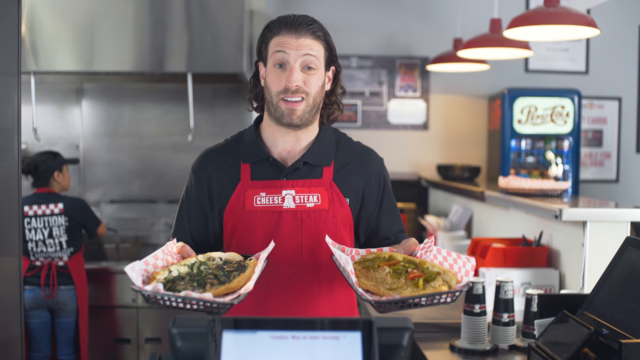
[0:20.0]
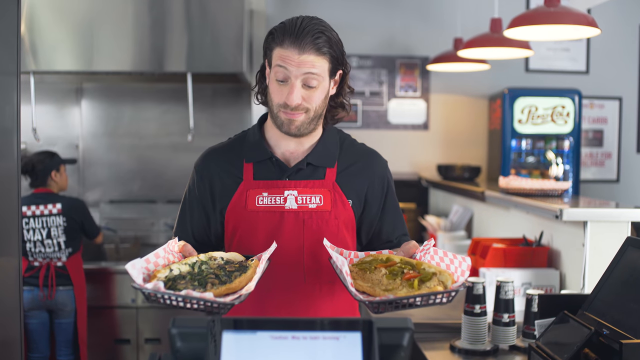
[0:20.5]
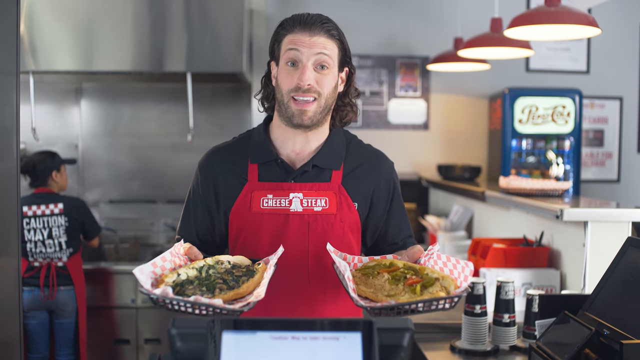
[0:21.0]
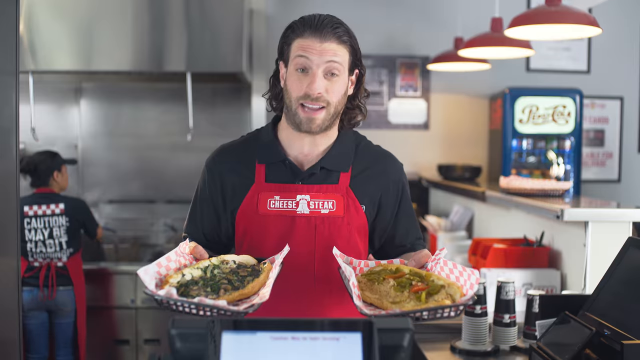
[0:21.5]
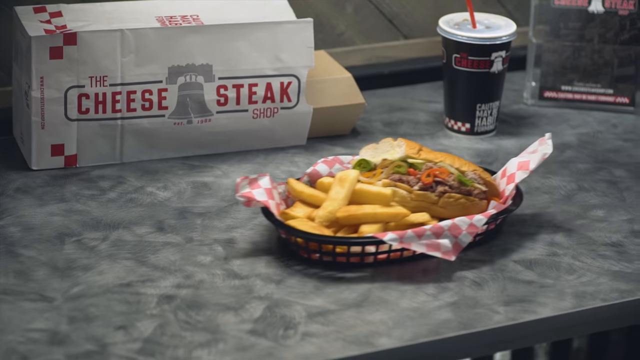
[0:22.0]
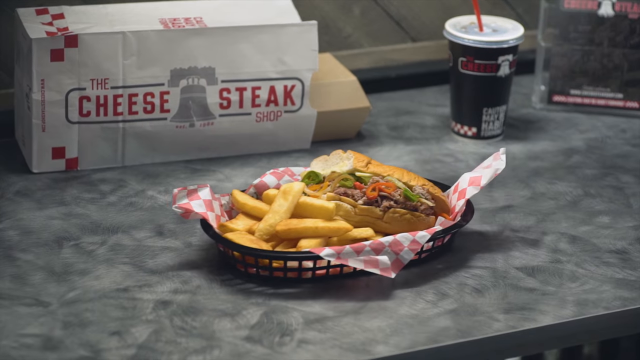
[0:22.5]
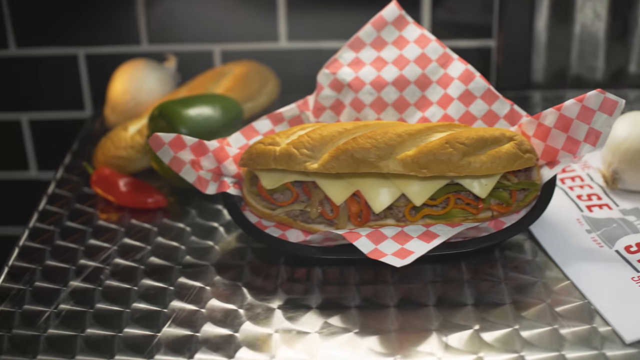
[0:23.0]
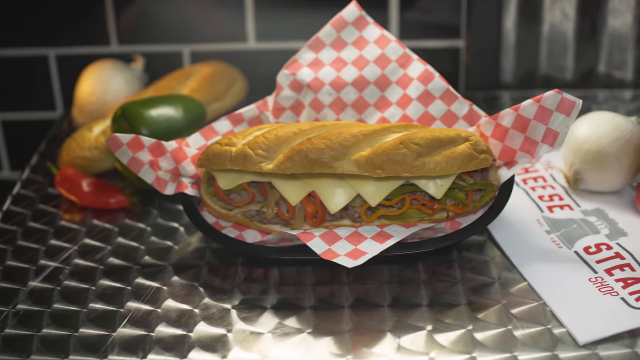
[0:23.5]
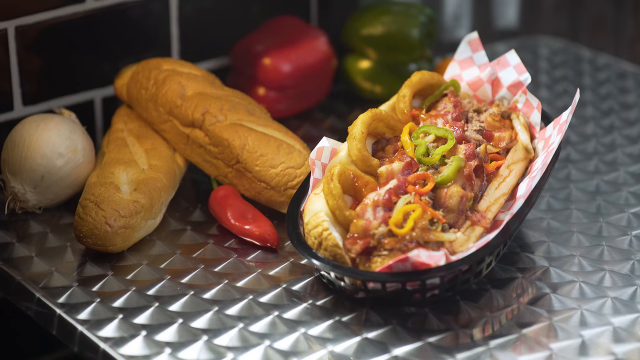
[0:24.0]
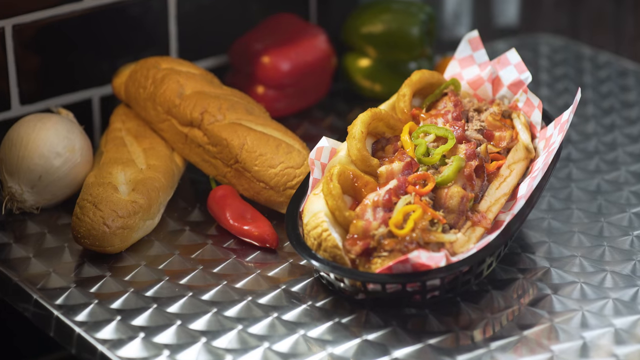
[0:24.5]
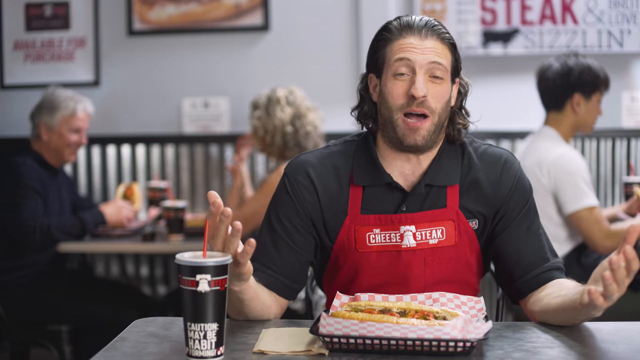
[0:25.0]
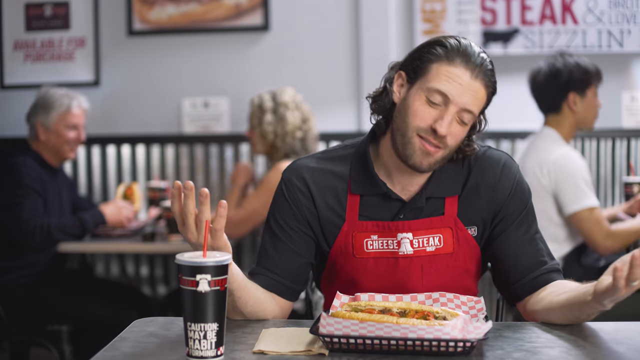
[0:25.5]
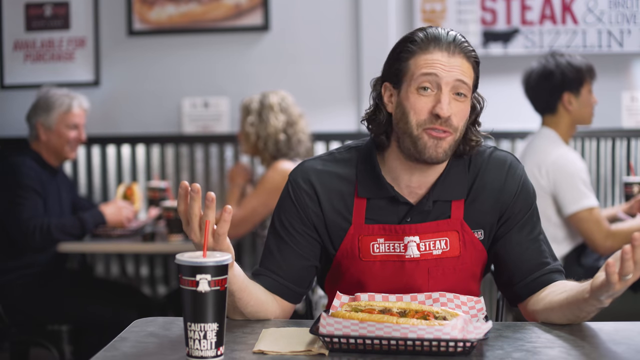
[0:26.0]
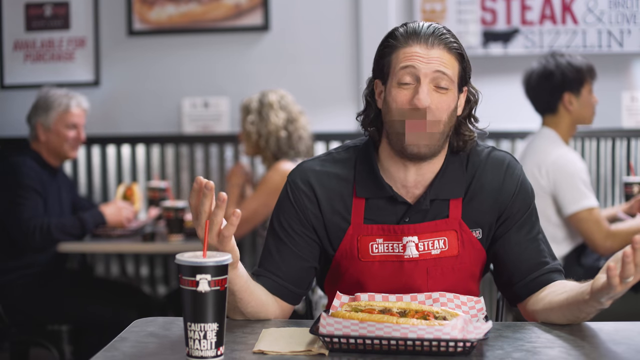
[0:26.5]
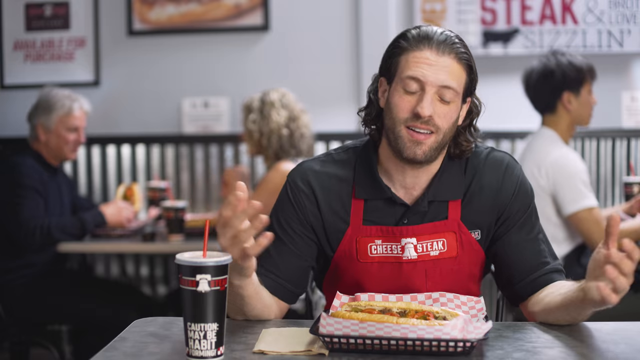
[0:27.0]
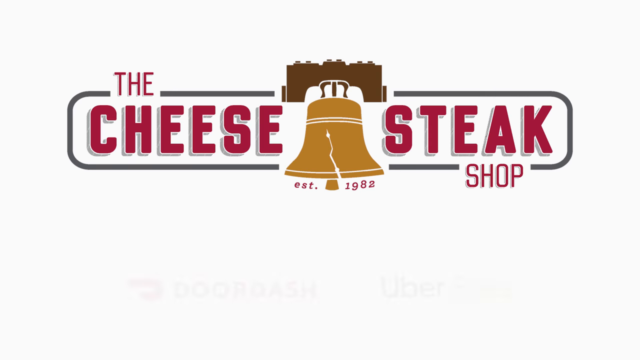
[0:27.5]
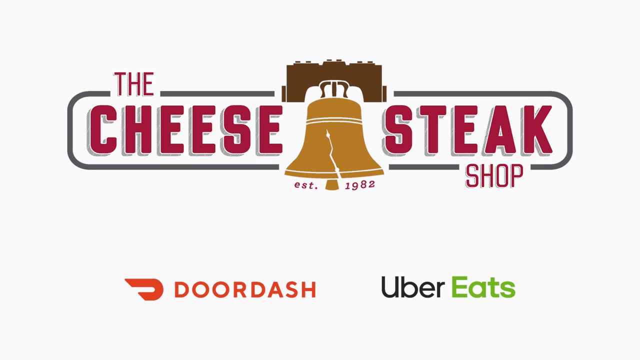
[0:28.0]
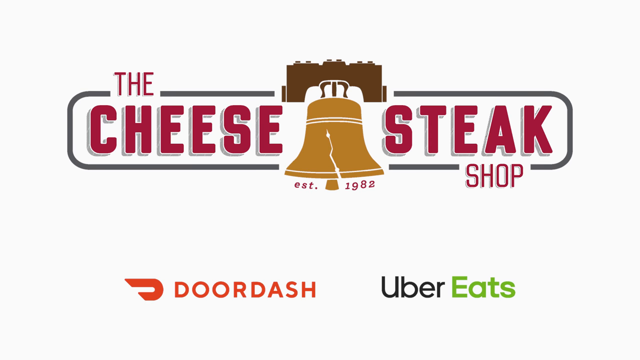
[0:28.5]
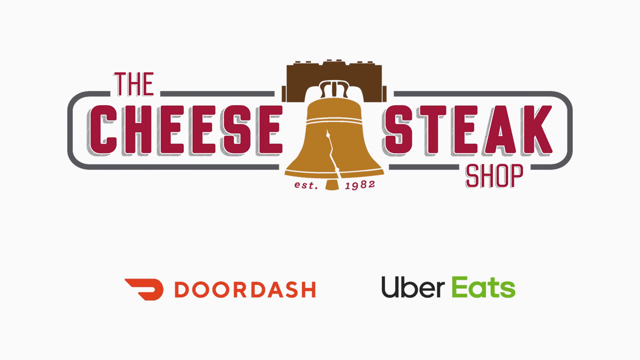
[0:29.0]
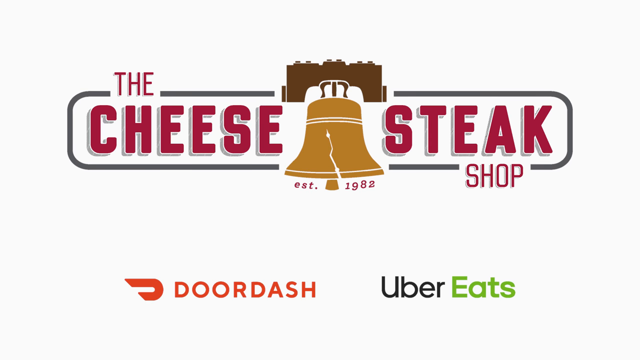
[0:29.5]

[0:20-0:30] The man carries two plates of food and throws them on top of the table. One has bread with mincemeat inside, veggies and some chips; the other has meat inside some bread along with some cheese. Next to him is a cup of cola. The last shot shows text mentioning "the Cheese Steak Shop", "1982" and "DoorDash or Uber Eats".